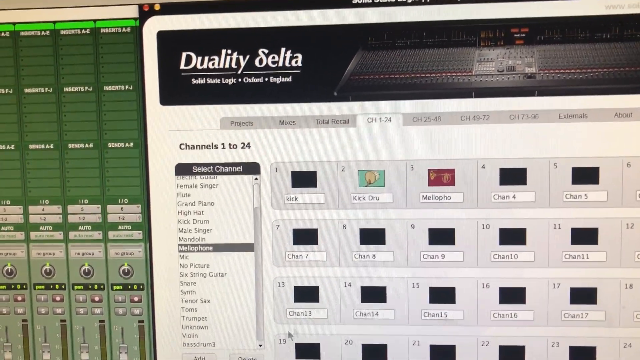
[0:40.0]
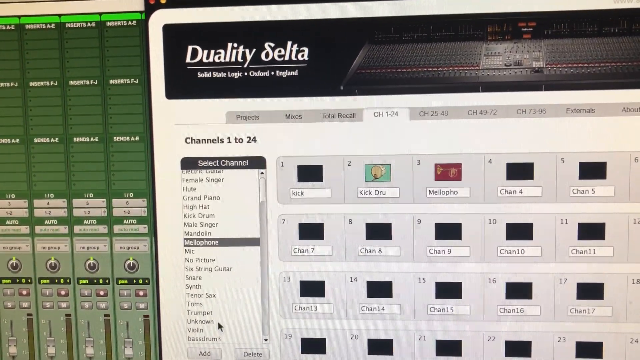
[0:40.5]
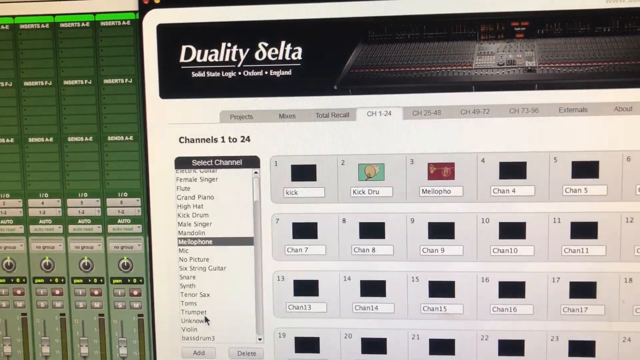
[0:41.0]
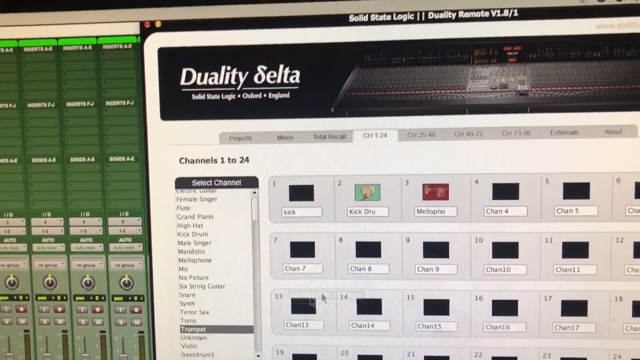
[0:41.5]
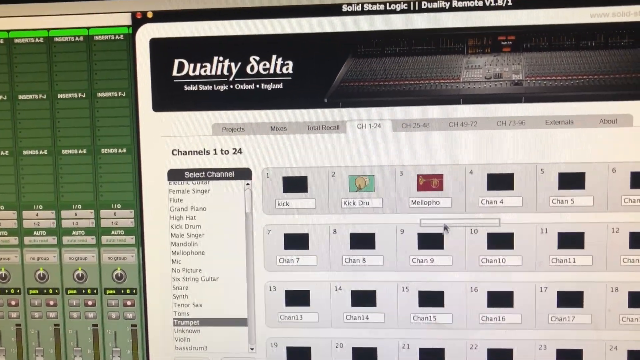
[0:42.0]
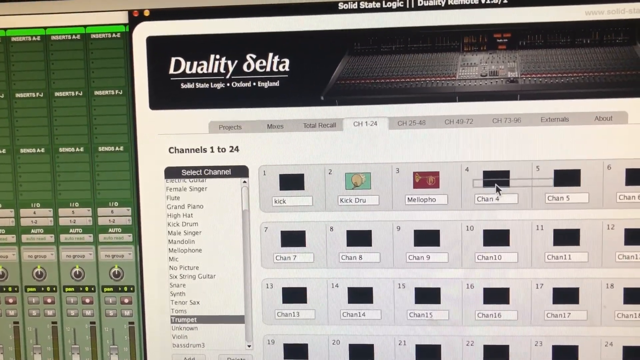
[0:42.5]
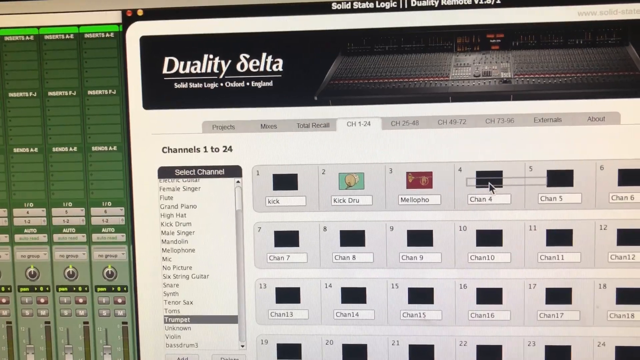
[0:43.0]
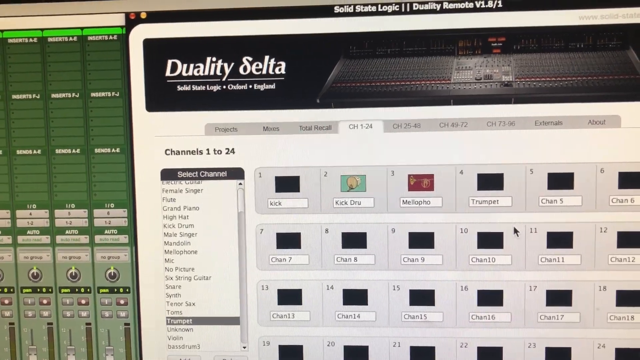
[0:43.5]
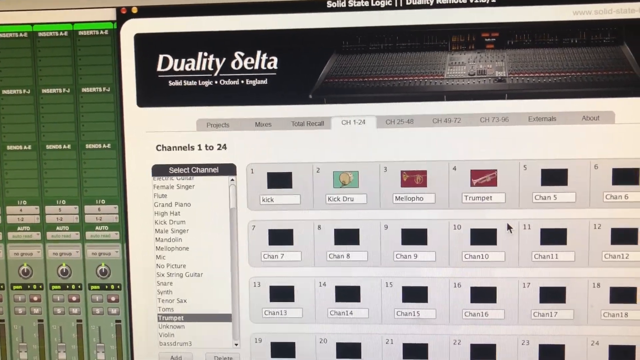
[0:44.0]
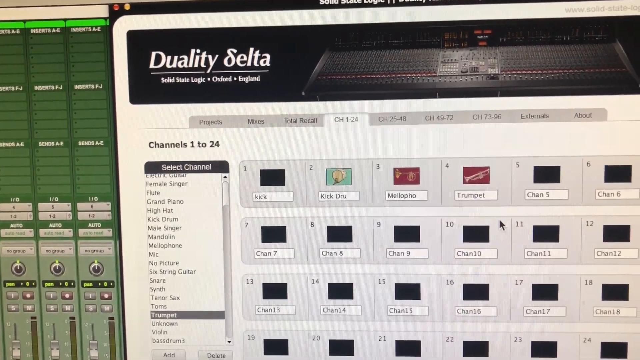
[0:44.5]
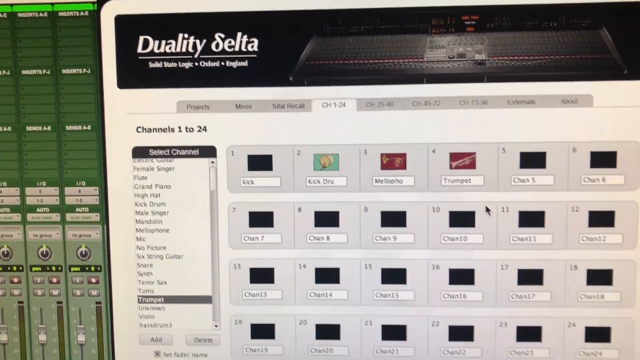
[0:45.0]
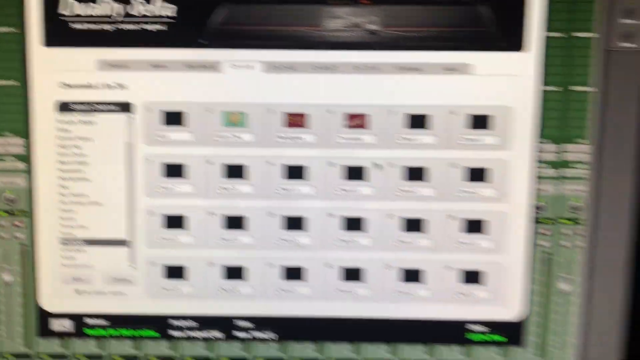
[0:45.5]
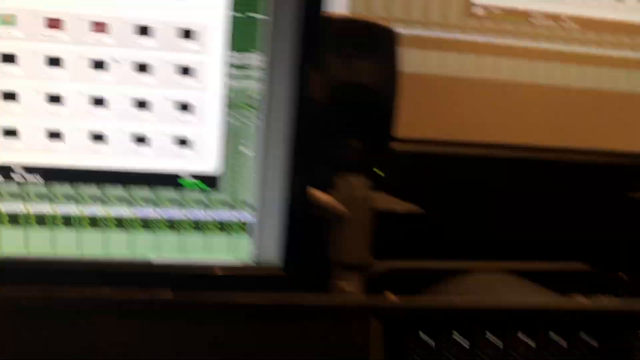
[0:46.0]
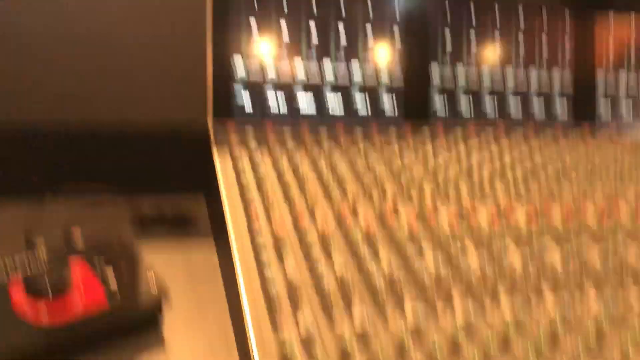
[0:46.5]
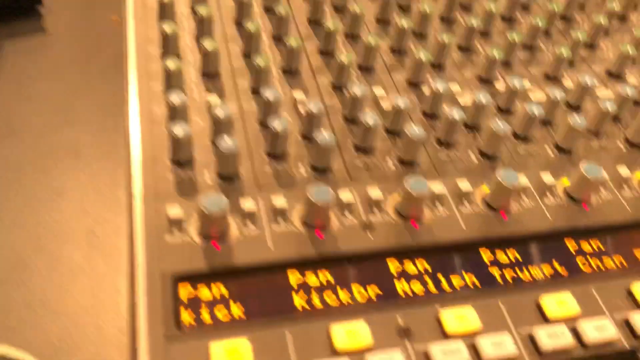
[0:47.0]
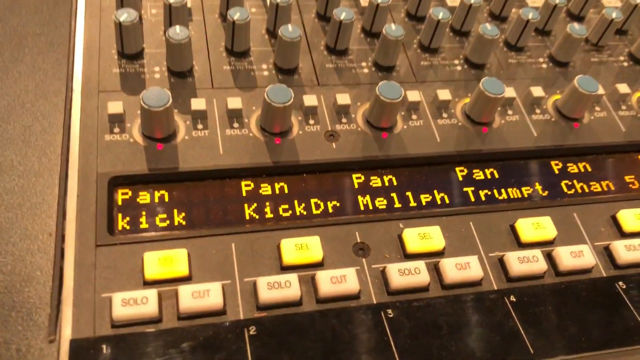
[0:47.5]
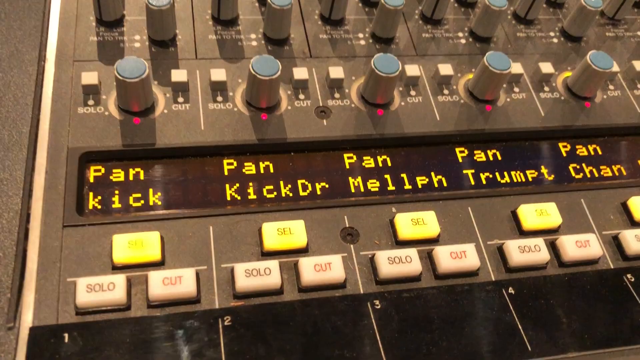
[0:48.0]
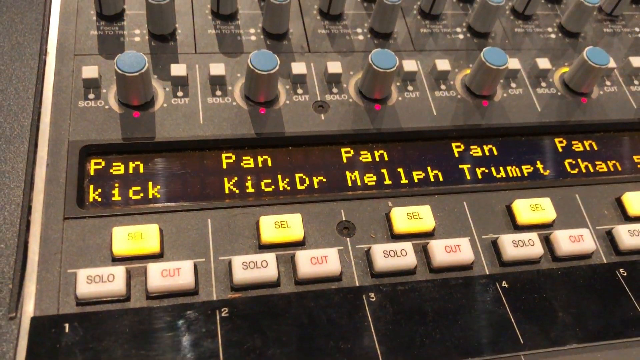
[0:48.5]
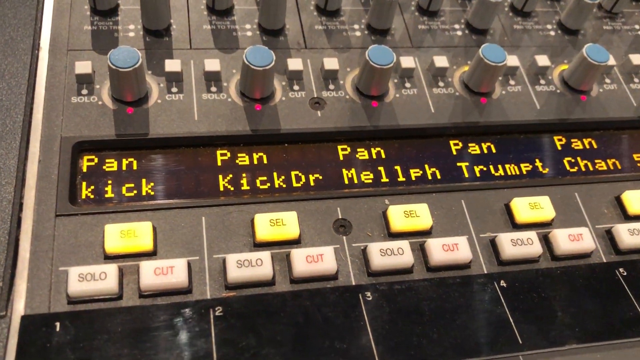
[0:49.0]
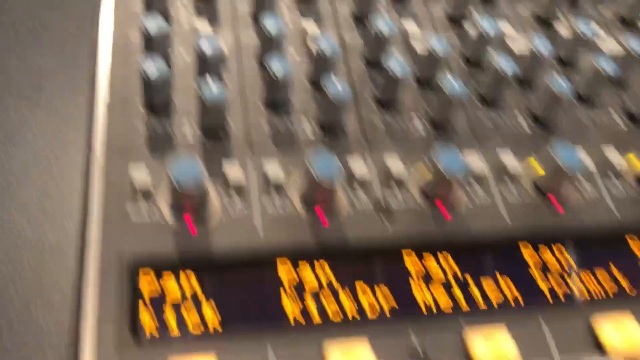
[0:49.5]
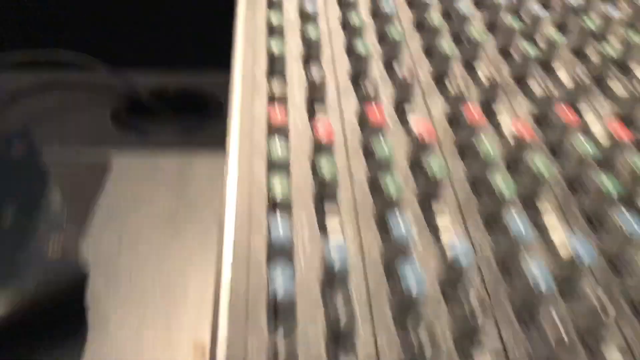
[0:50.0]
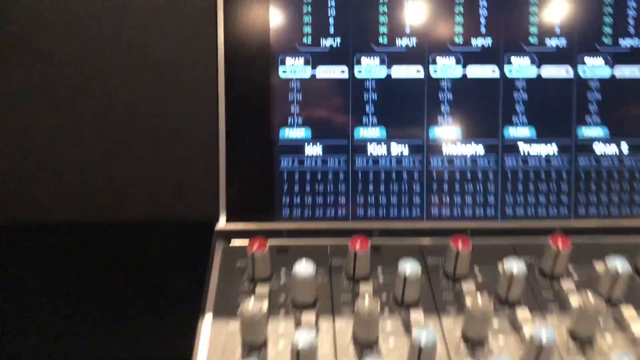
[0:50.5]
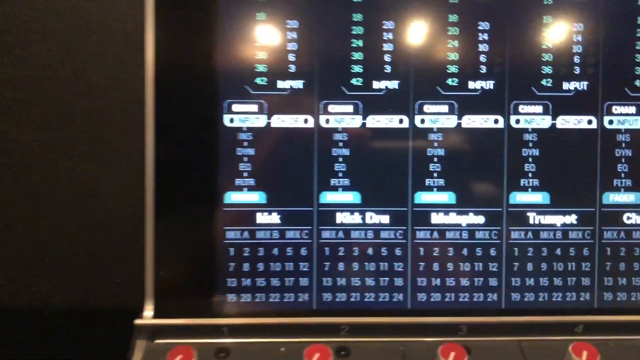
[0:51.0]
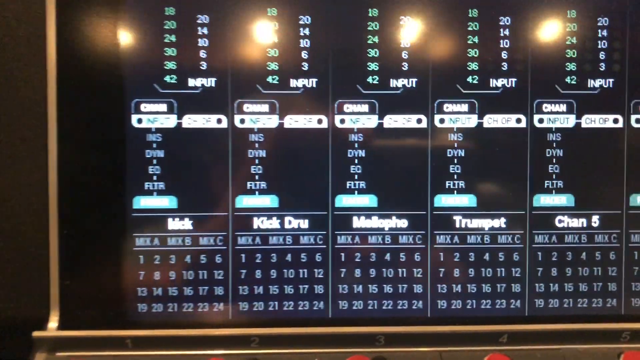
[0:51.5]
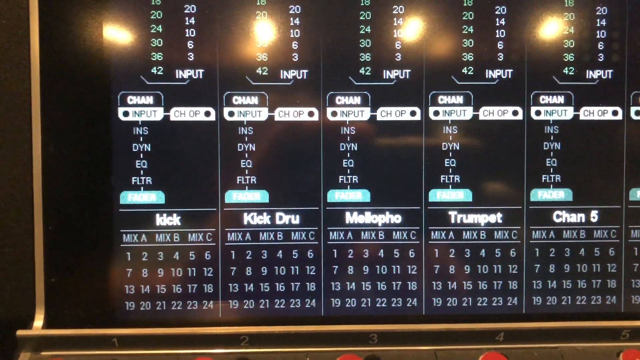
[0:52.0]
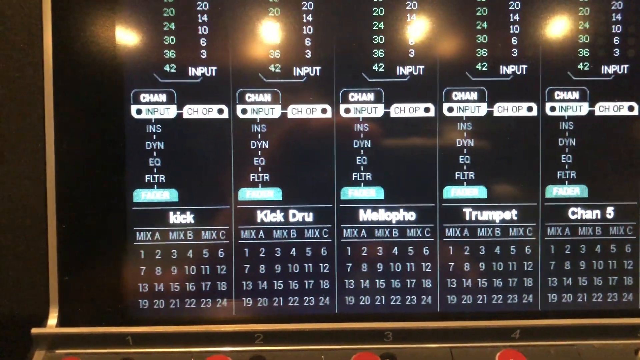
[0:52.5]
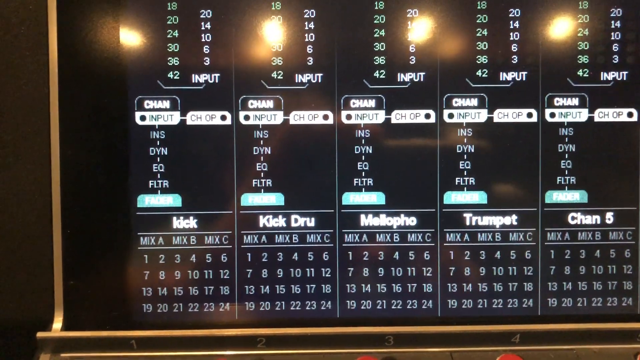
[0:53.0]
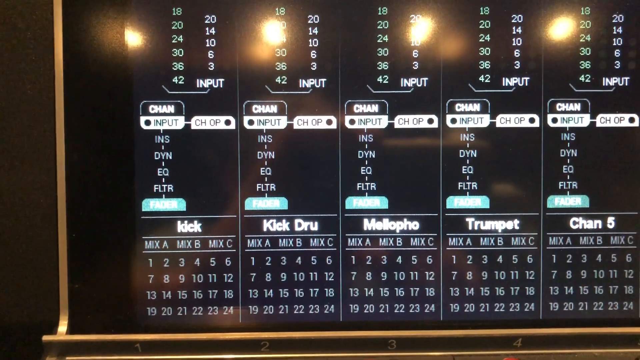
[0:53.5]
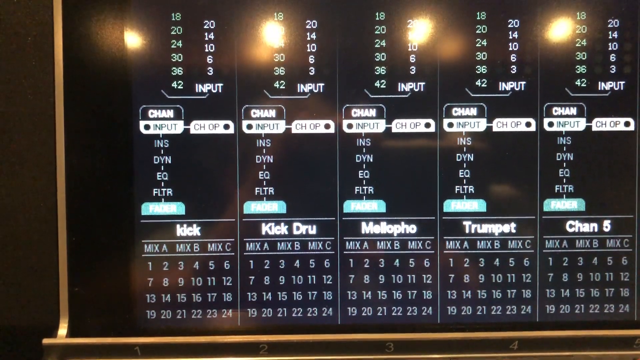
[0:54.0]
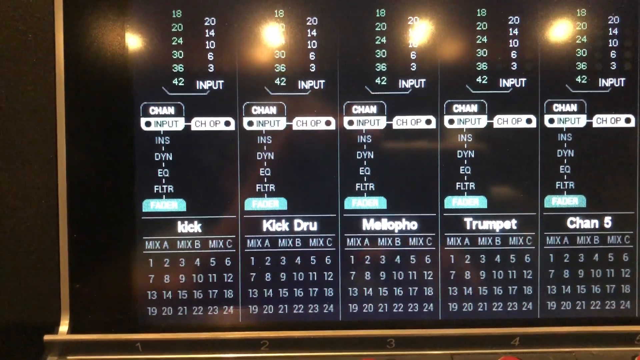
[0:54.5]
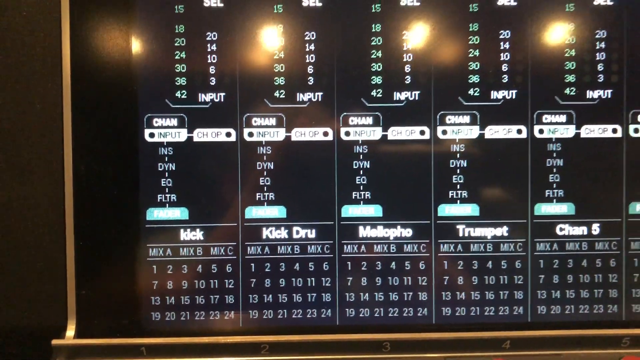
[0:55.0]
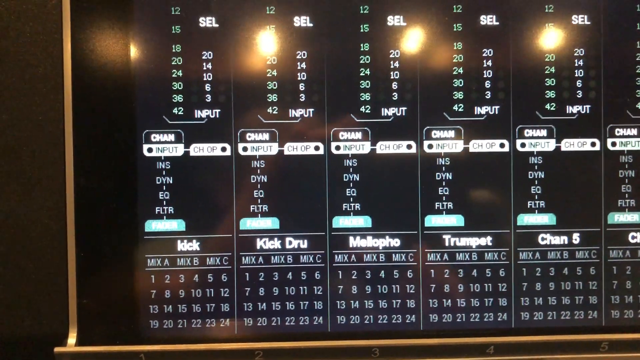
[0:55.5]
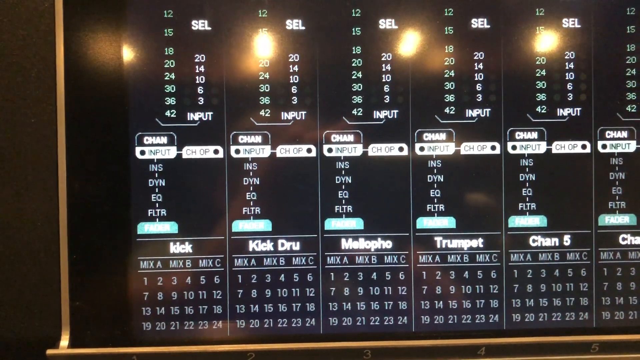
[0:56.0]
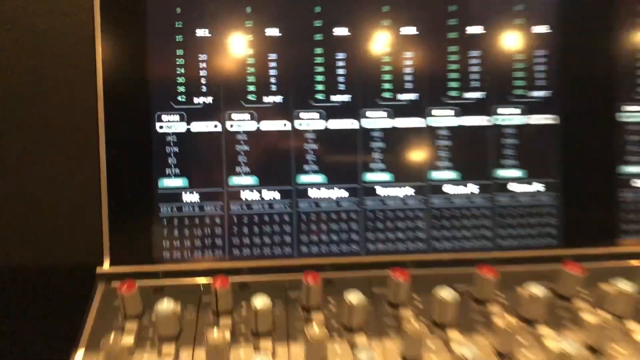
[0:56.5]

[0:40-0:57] The camera is kind of jostling, but the website is called "duality selta", and underneath it says it is from Oxford, England. To the right, a little hard to see because the lighting is poor, is a more modern instrument panel. It is black and apparently has a digital interface with red writing on it. Underneath are different tabs: "projects", the current one "CH 1-24", channels 25 through 48, and two others, an external tab and an about tab. The cursor goes down and apparently clicks on trumpet, dragging it to box four, so boxes two, three and four have been filled in a row. As this happens the box goes from black to colored, this time a maroon box with a picture of a trumpet. The view then moves down the instrument panel with the blue dials, where it says "pan kick" and "pan kick dr". Back on the computer, there is a "chan" tab and an "input" tab. It shows something almost like a chain of command: three letters with a line underneath, three more letters with a line underneath, and then a teal tab. There are also "mix A", "mix B" and "mix C" columns, with what looks like a series of numbers in a row underneath.